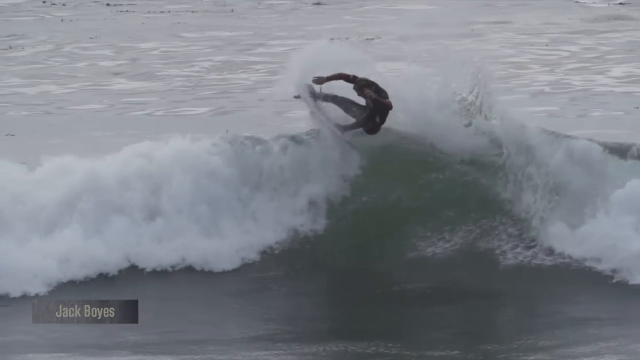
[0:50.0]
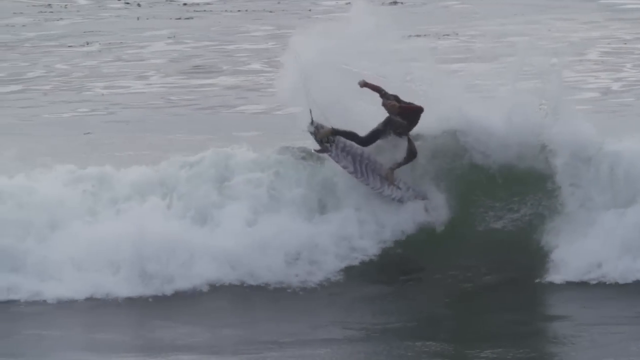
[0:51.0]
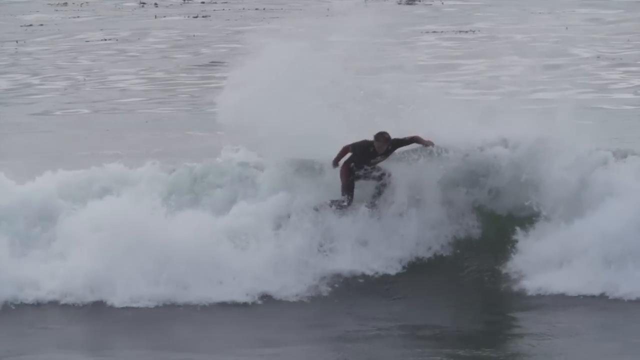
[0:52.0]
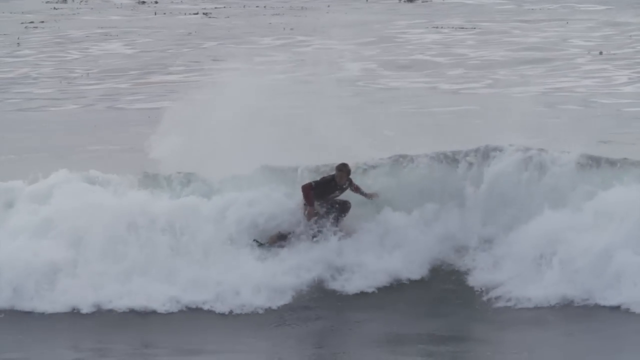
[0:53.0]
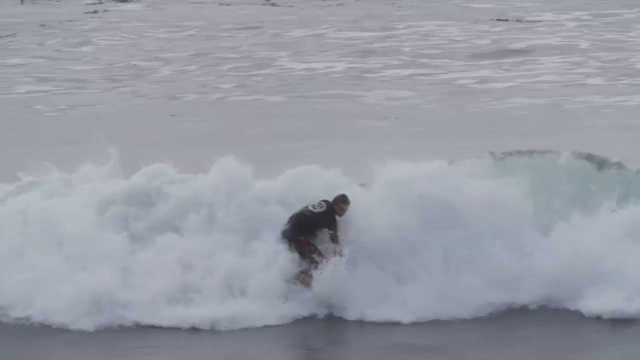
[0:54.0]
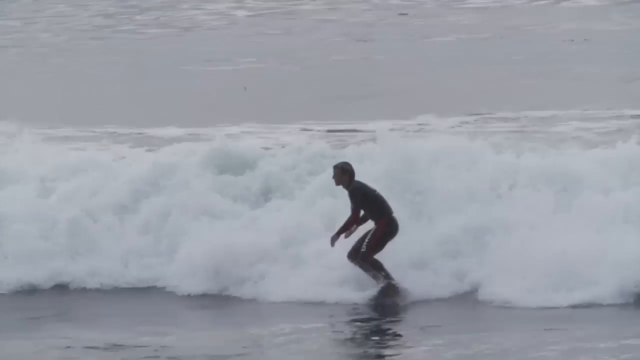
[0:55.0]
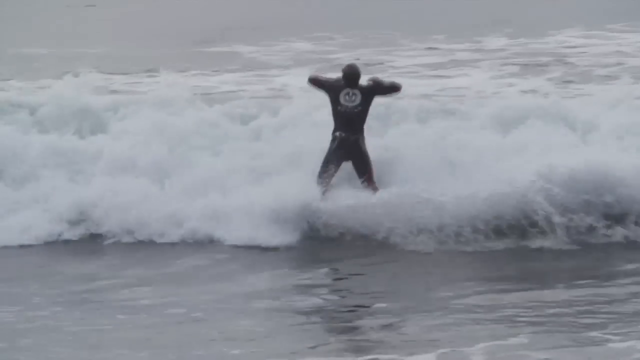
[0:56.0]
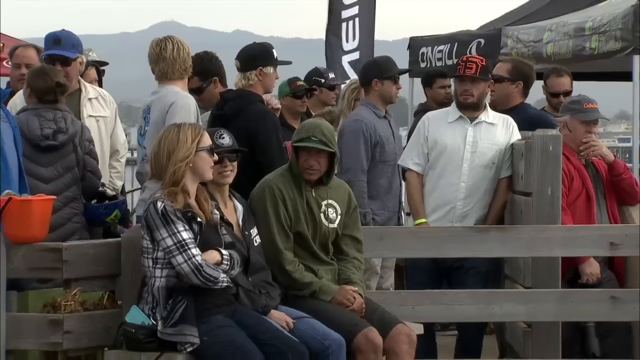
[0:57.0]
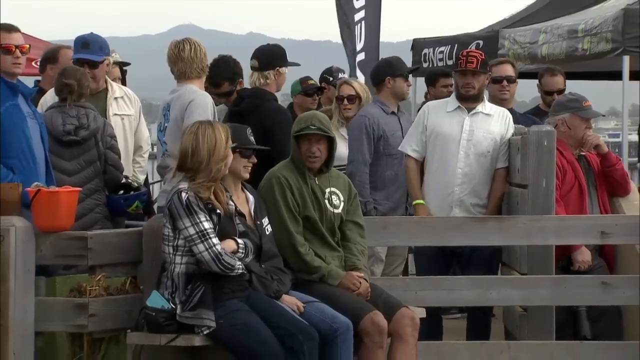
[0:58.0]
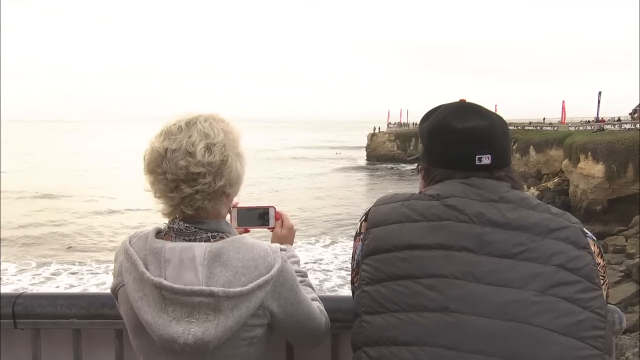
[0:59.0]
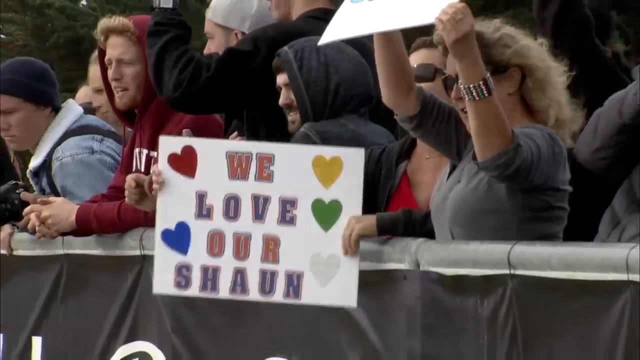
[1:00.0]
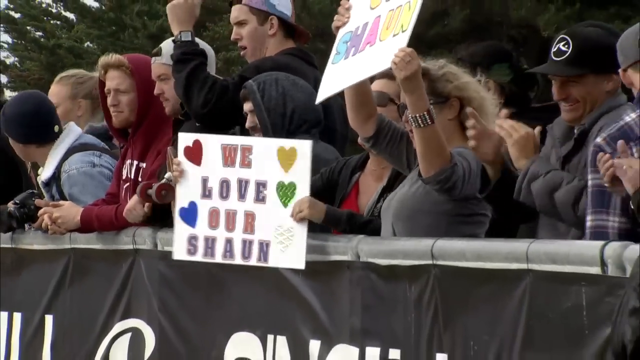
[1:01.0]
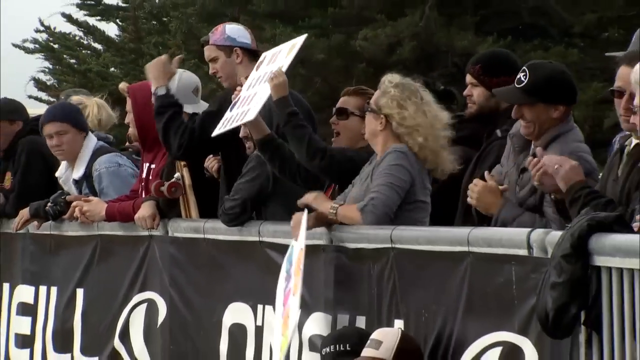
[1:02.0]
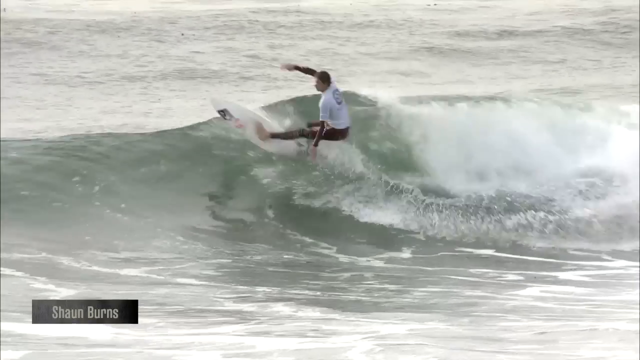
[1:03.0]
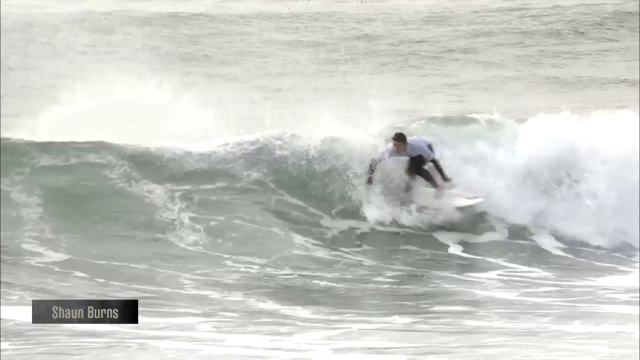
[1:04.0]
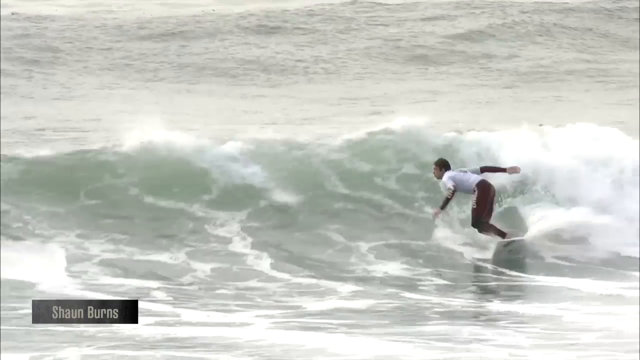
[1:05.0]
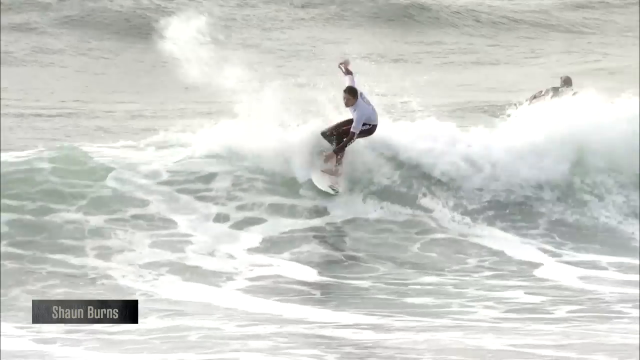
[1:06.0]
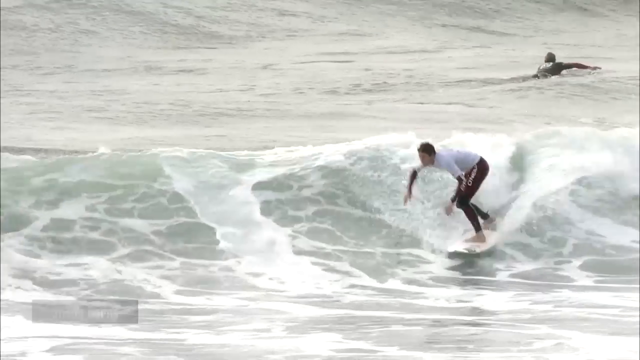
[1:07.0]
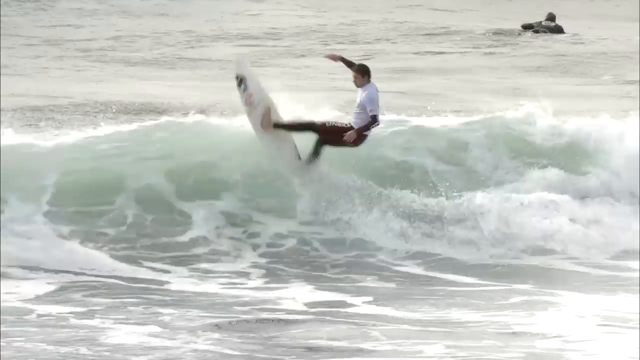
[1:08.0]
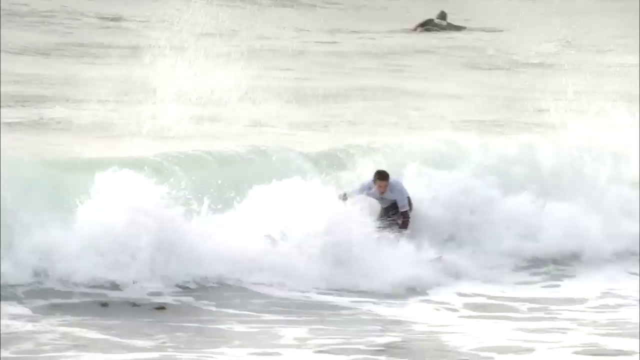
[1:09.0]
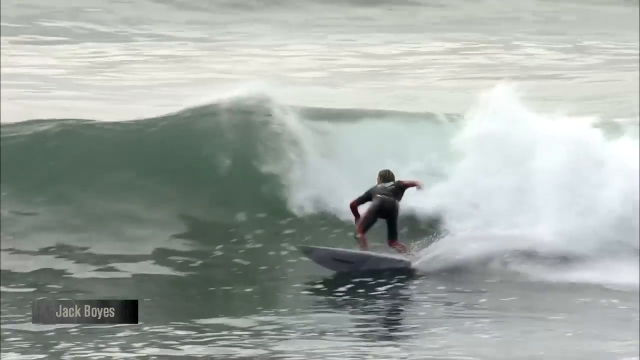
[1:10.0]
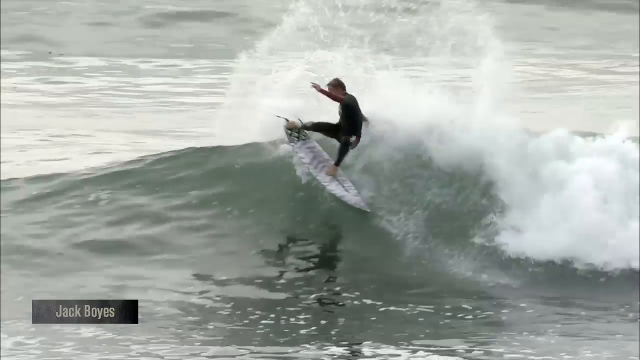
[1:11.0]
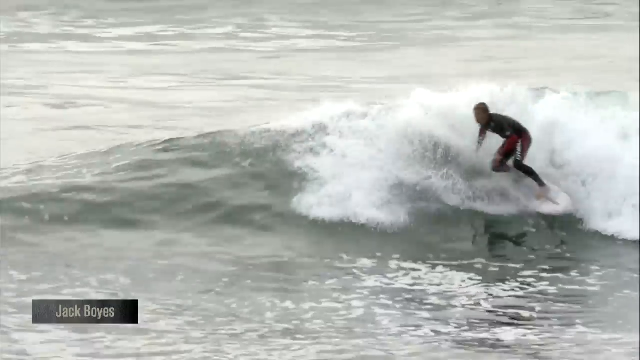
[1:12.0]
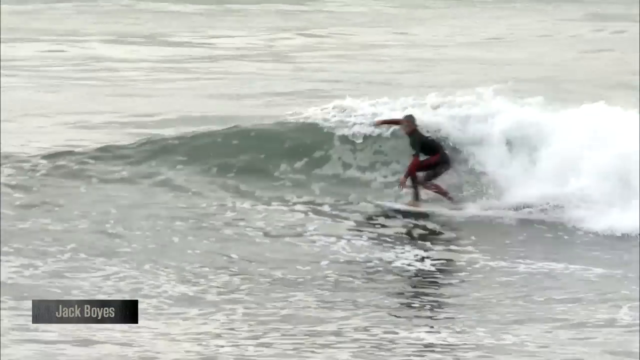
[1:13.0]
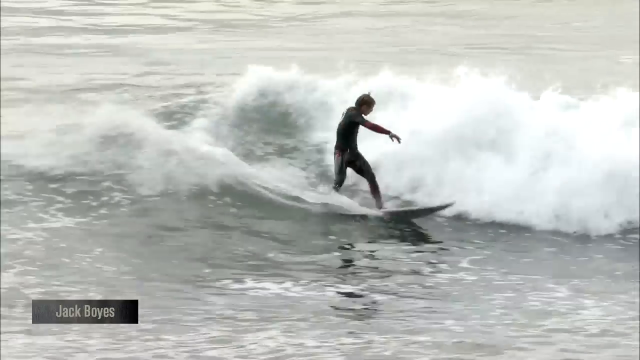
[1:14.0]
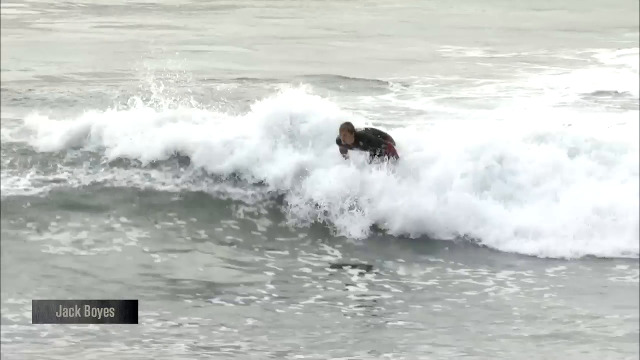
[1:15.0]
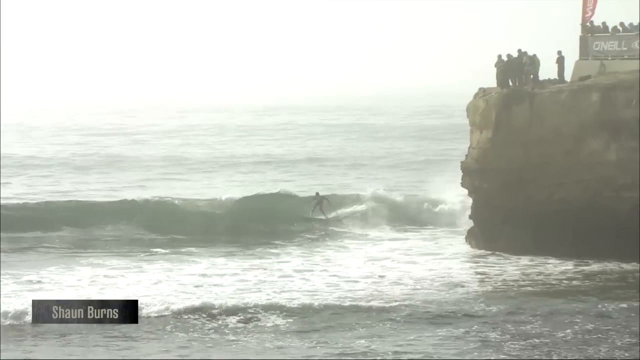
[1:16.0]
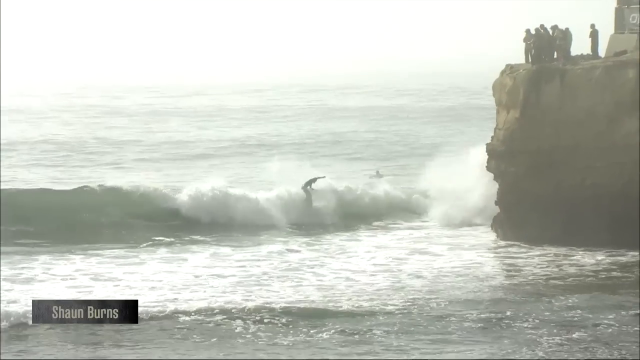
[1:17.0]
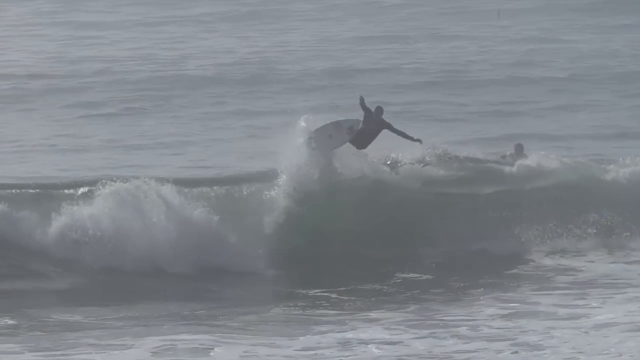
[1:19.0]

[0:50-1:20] In the ocean, a surfer rides at the top of a wave on a surfboard with what looks like a tiger print, wearing a dark top and dark pants. He does a flip at the top of the wave and rides the white water at the bottom of it. The scene changes to a crowd of many people. In the top right corner of the screen is a tent with a black banner on its side bearing white text that says "O'Neill". In the foreground is a Caucasian woman with blonde hair in a plaid-looking jacket or top. She is sitting next to another woman; both appear to be wearing shades. The second woman wears a black cap and a black jacket. Next to her is a man in a green or OD green hoodie, with the hood up and a green cap underneath, and a white logo on the left chest. The three of them are sitting on a bench or something similar next to a fence, with many other people behind them on the other side of the fence.